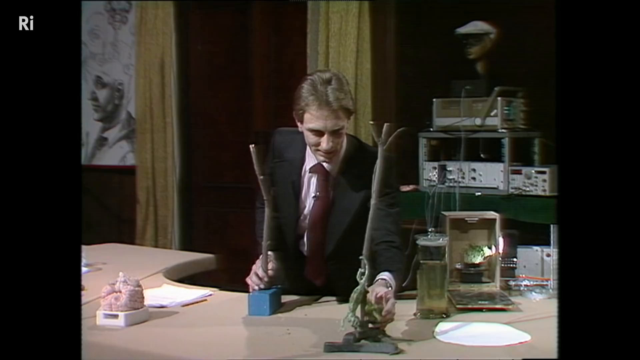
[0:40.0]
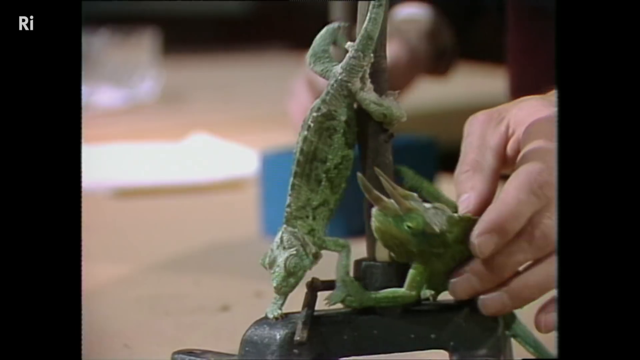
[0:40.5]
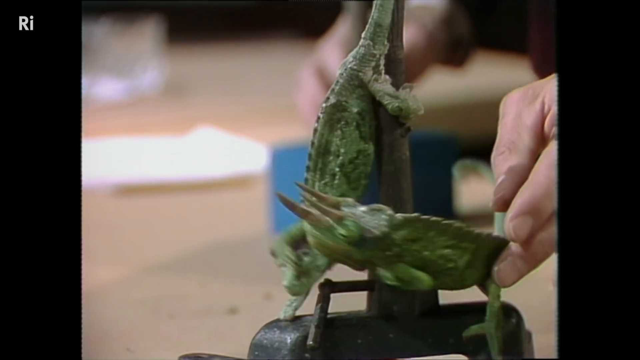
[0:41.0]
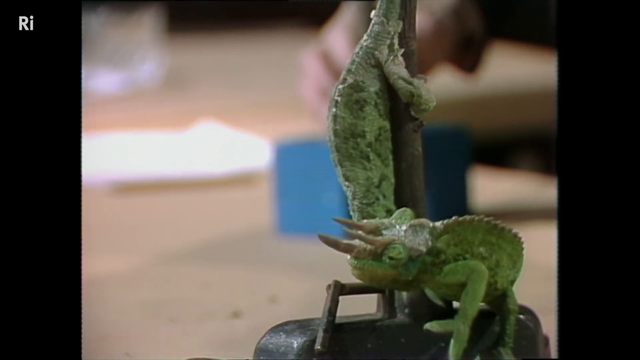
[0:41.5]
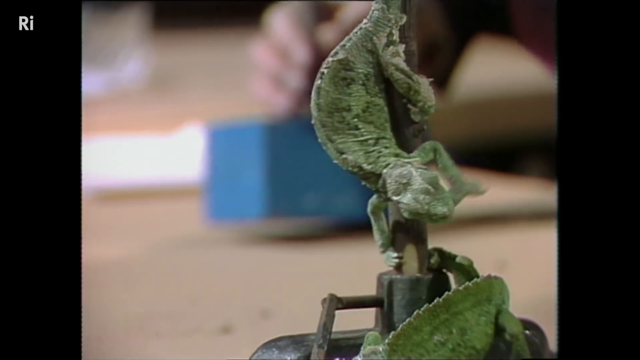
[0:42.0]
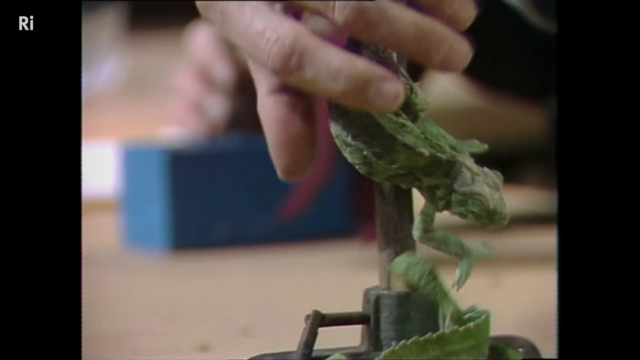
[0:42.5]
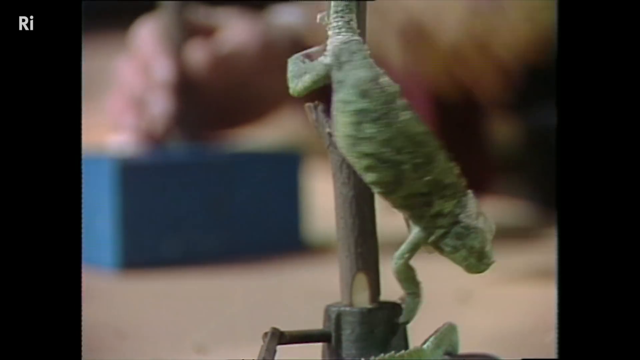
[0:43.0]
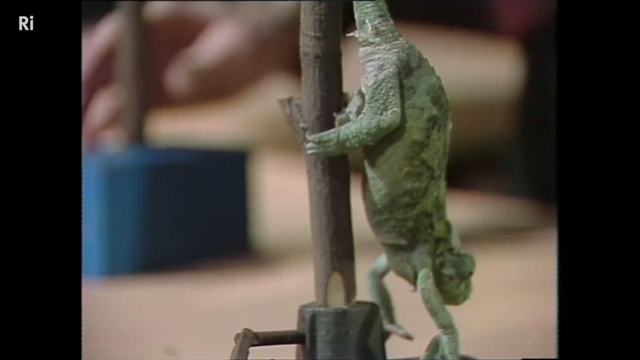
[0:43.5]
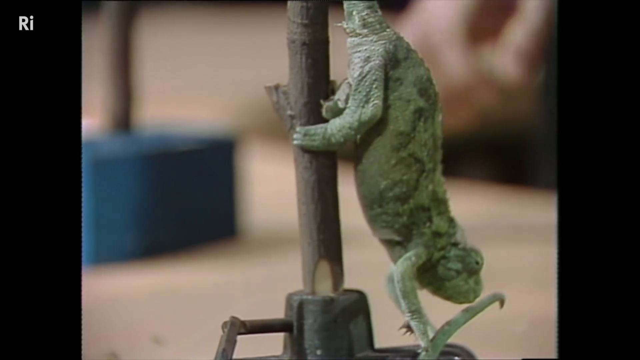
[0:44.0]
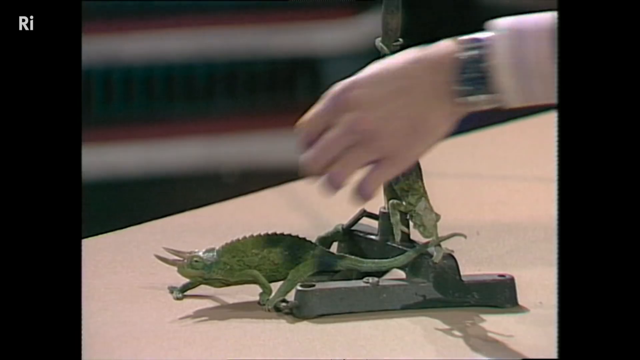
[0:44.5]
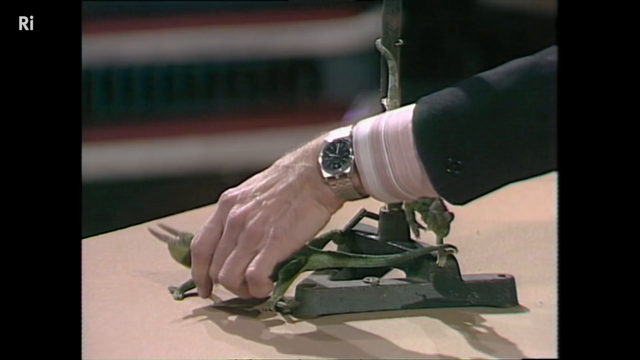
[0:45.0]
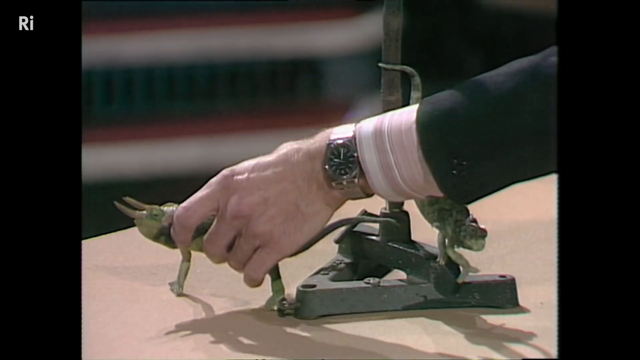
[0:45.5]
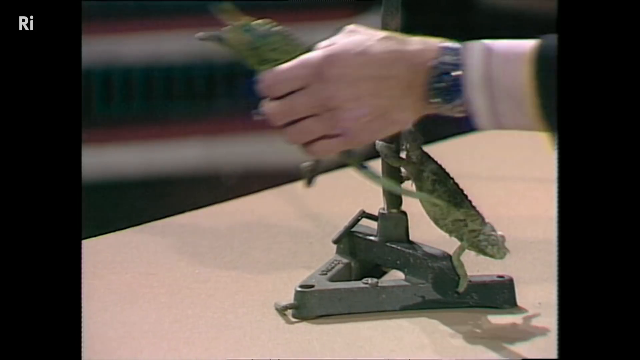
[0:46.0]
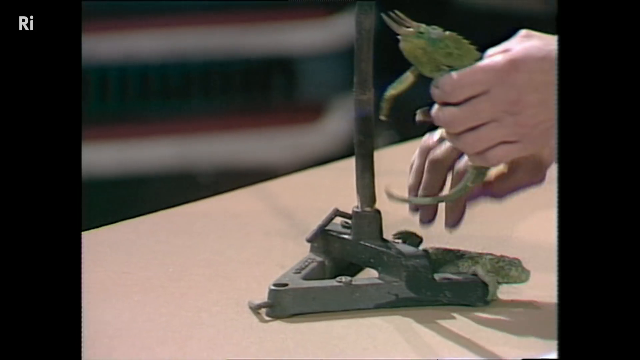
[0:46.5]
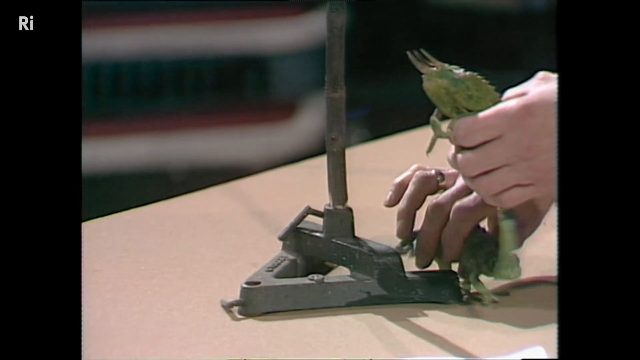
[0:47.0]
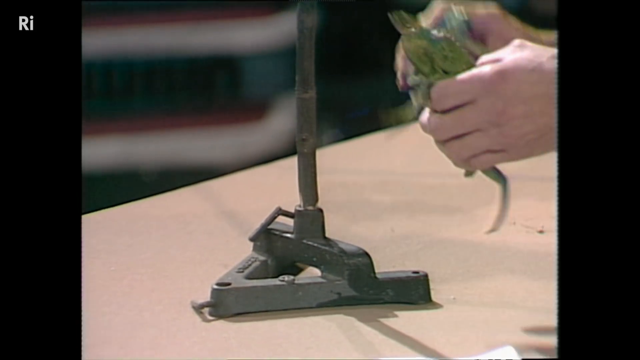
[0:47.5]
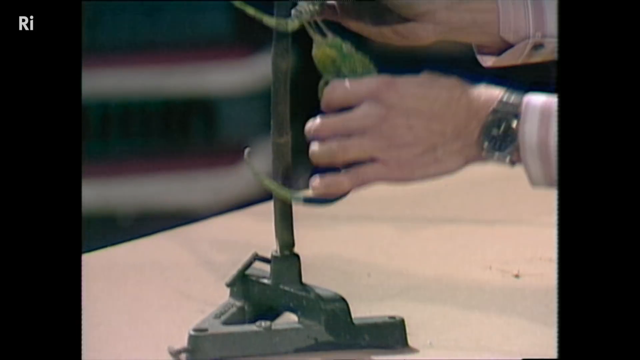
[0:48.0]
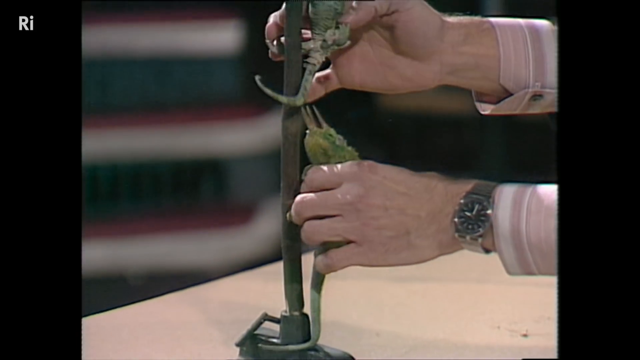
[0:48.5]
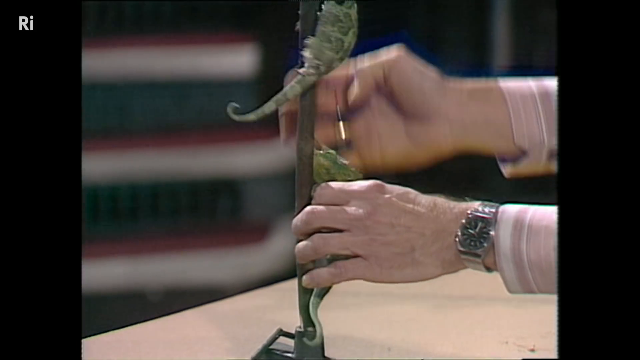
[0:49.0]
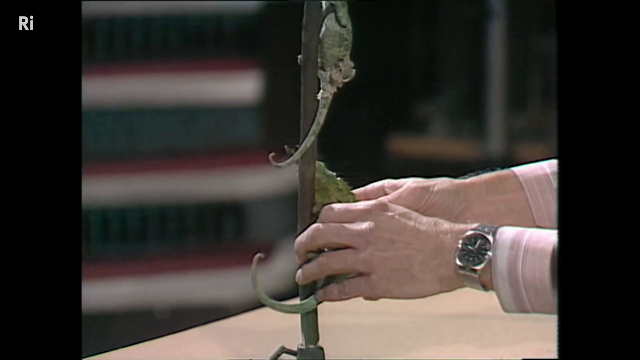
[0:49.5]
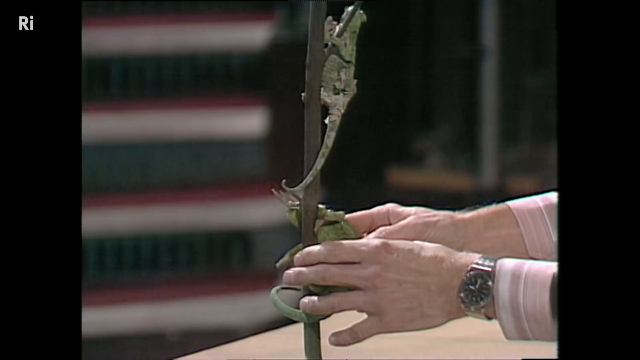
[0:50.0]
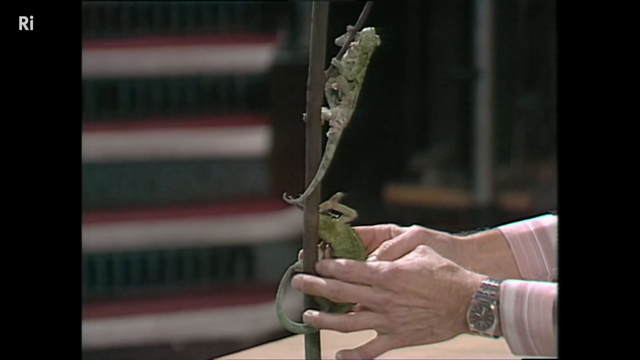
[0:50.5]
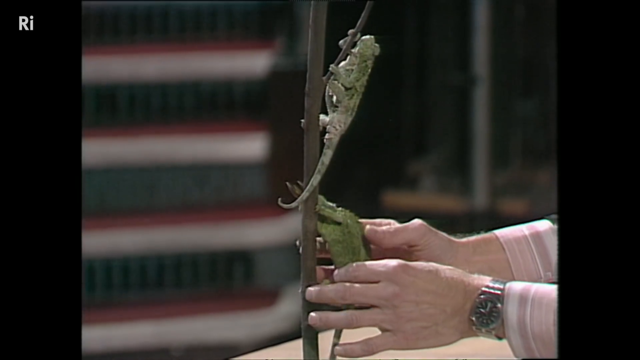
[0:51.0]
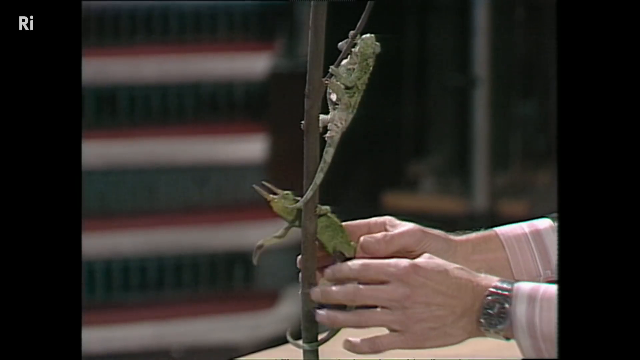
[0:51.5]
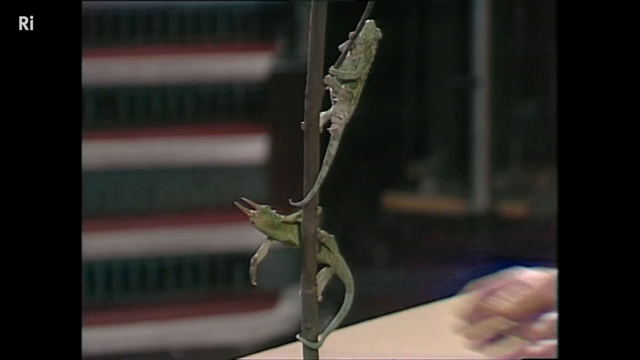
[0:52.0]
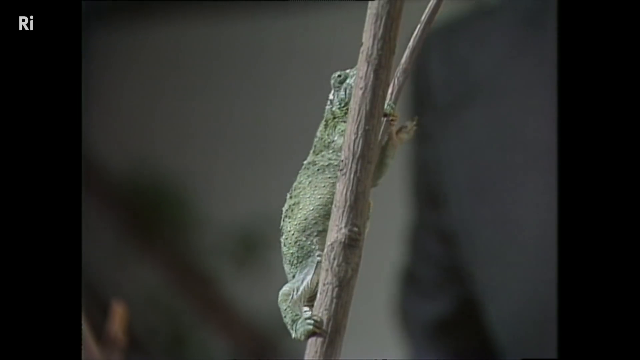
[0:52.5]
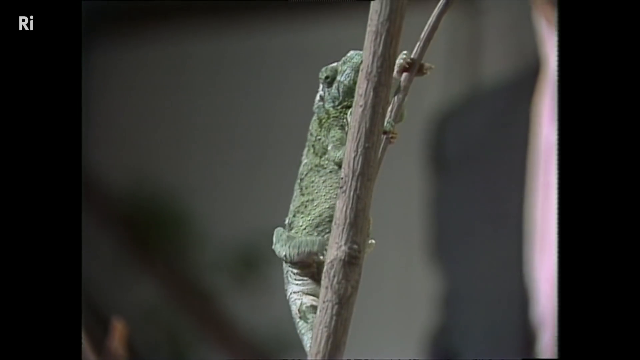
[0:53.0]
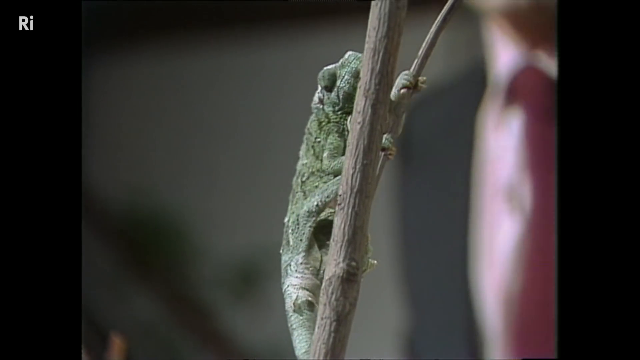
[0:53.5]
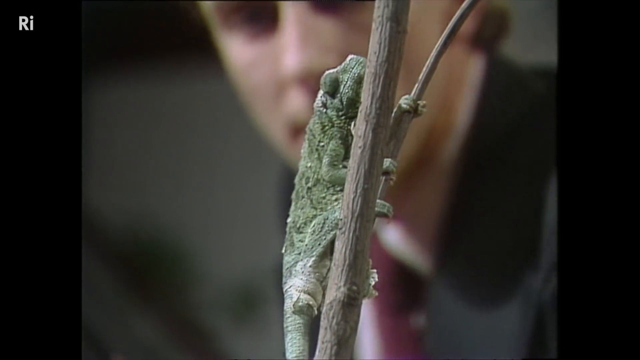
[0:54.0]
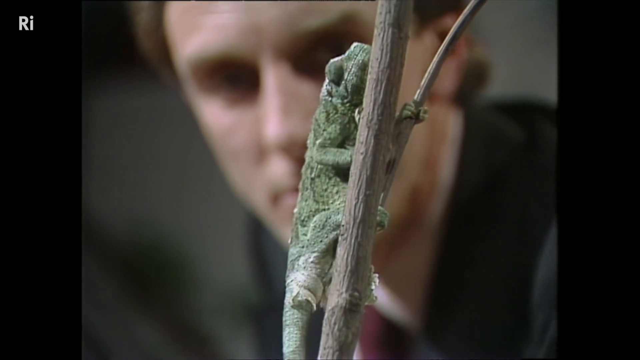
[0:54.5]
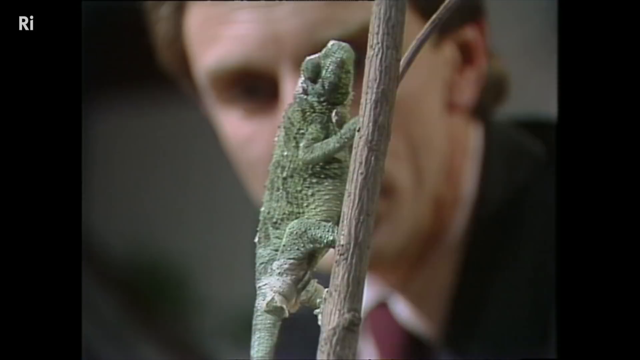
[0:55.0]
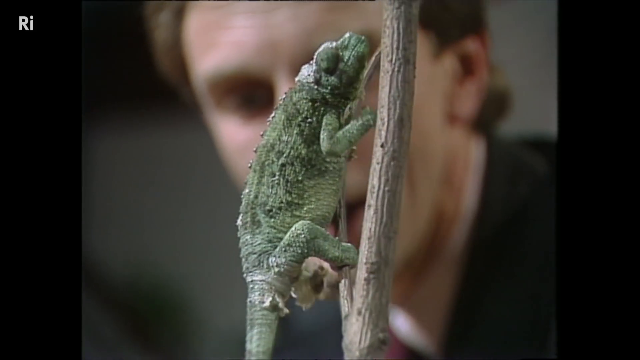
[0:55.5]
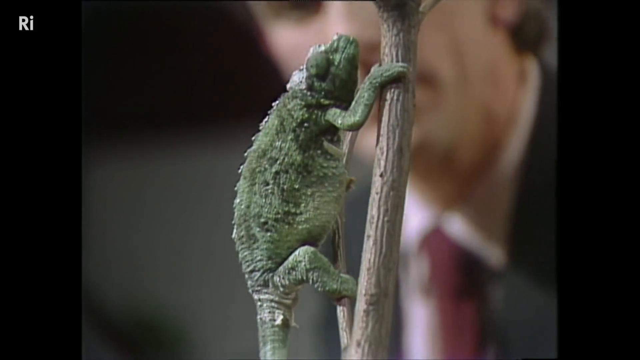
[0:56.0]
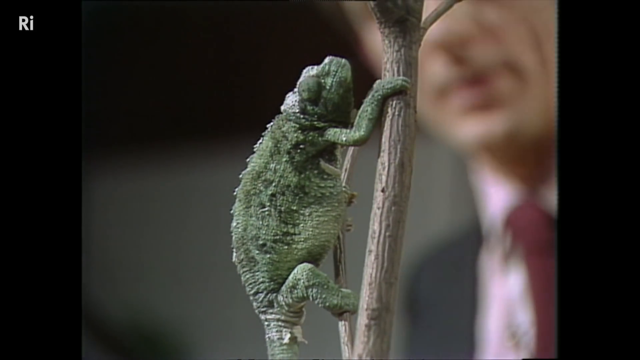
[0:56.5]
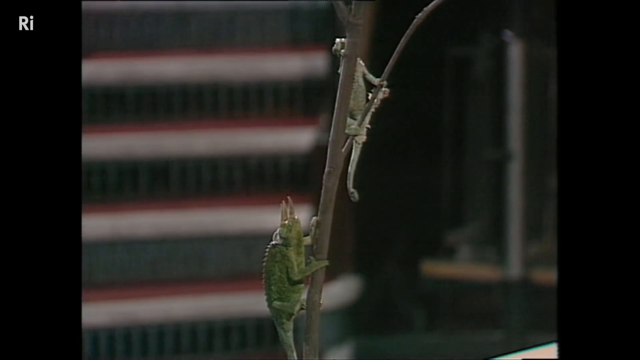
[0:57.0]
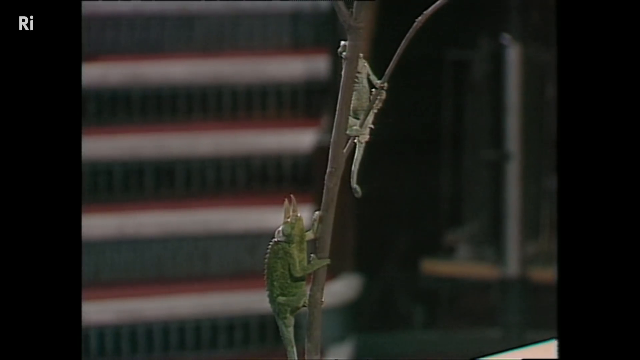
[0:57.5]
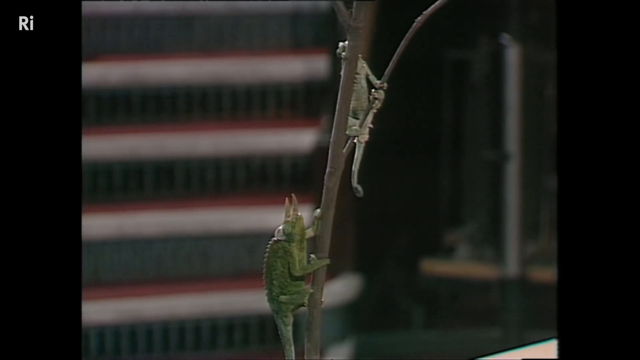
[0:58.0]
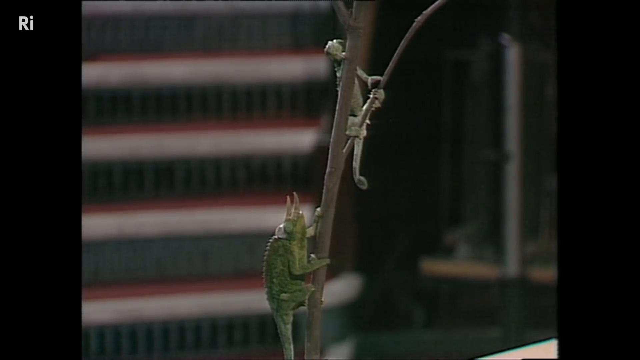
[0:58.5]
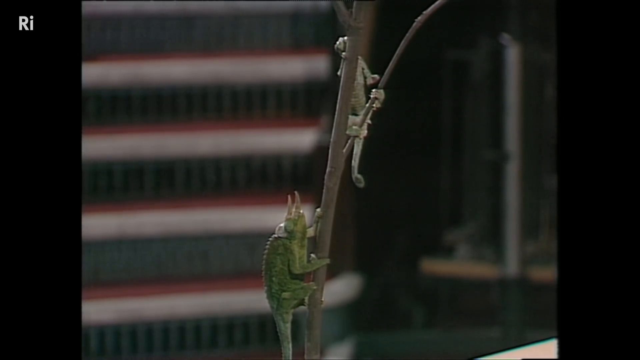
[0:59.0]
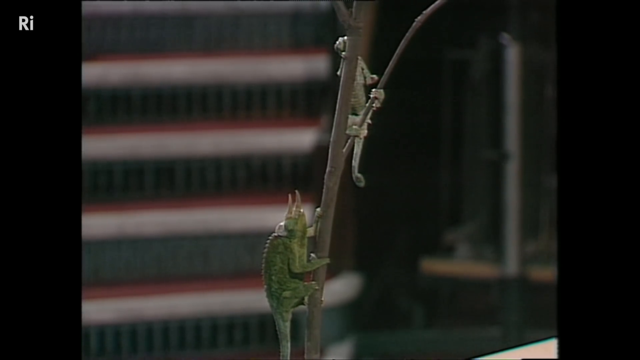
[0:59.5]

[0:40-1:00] A man is in his room, in some sort of workshop or station. A wooden table is in front of him with two sticks held upright by being attached to something like a platform. Wearing a black suit with a white shirt underneath and a red tie, he places two iguanas next to each other on one of the sticks; they briefly touch and then go in different directions. The shot changes to an up-close view of both iguanas, then to only one iguana against a blurred background. The man then picks up both iguanas with his hands, and a close-up of his hands shows he is wearing a watch. He places both iguanas onto a stick in different places.